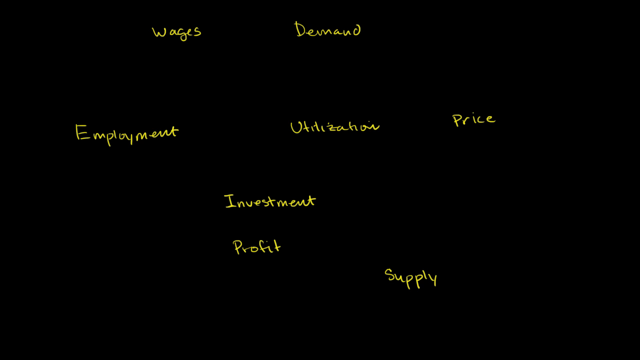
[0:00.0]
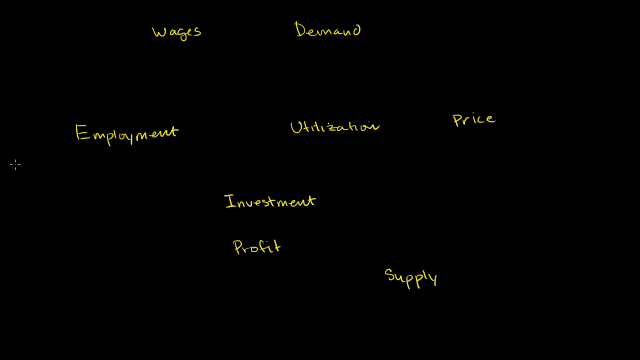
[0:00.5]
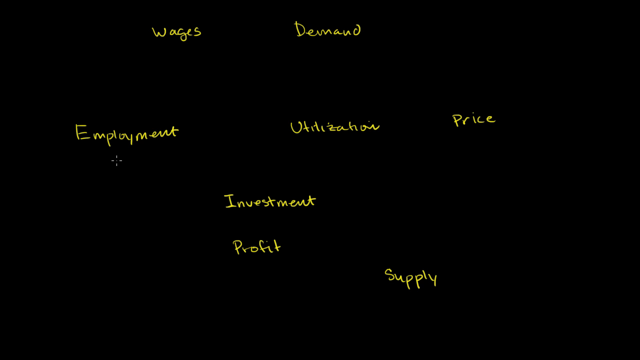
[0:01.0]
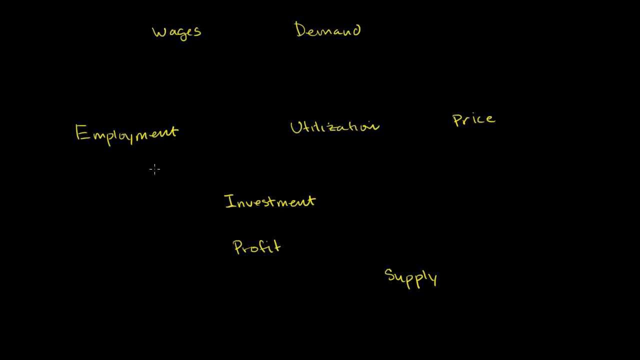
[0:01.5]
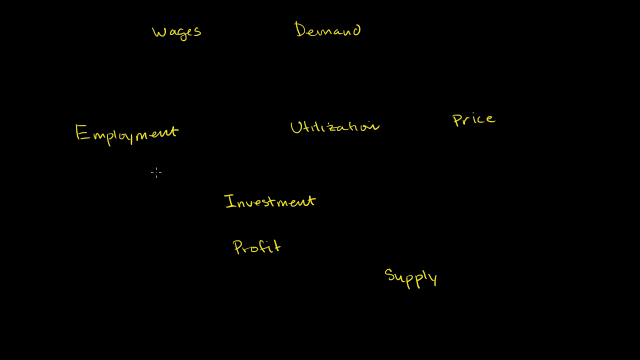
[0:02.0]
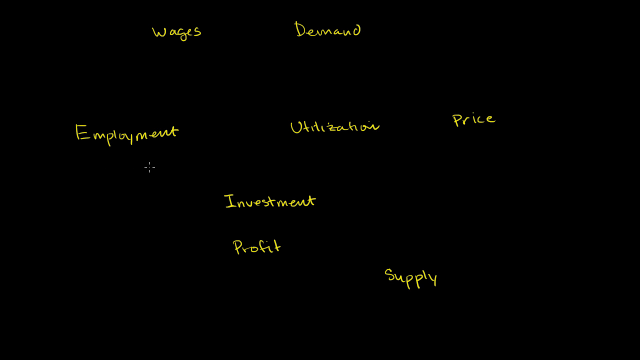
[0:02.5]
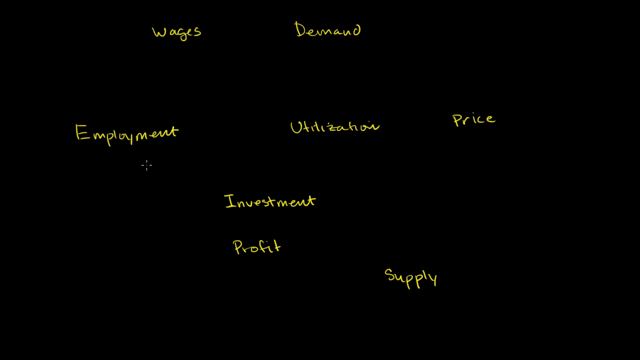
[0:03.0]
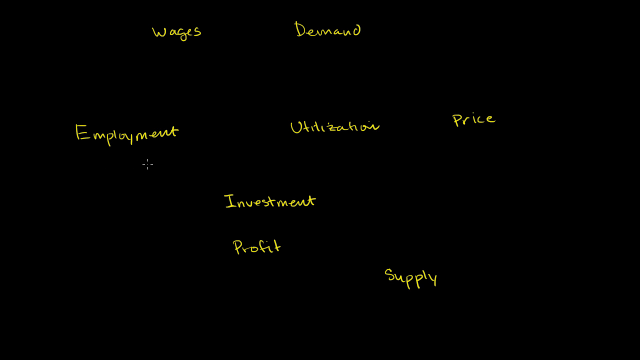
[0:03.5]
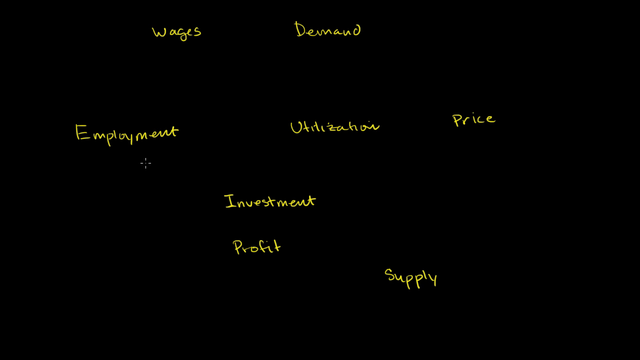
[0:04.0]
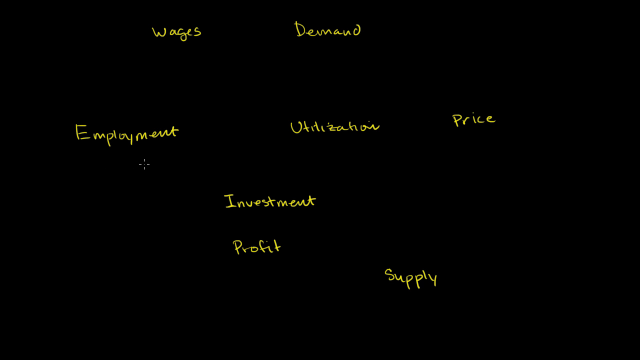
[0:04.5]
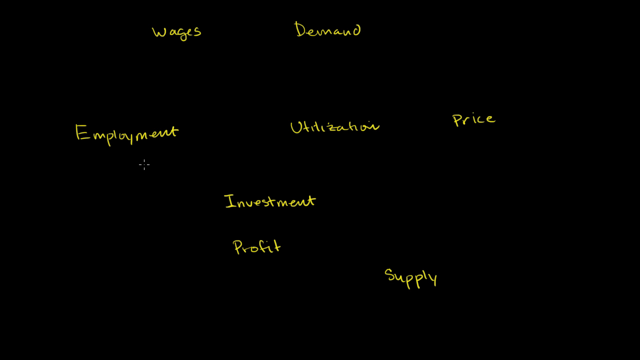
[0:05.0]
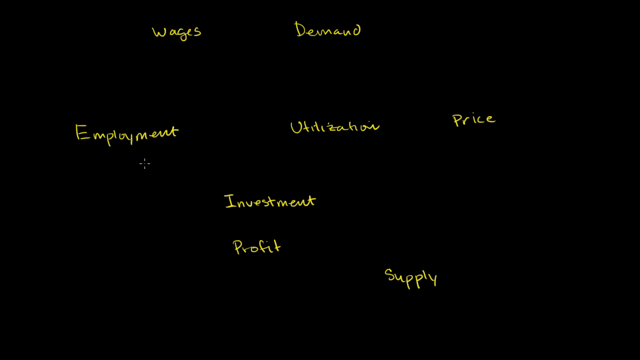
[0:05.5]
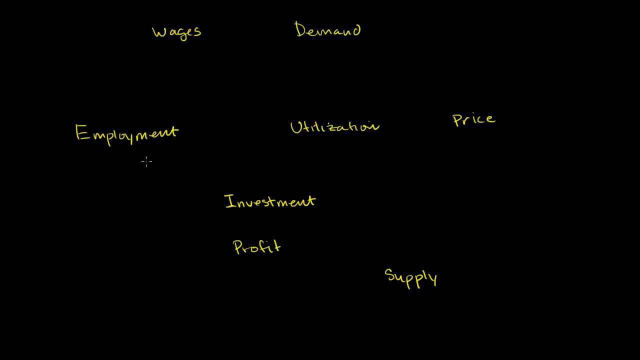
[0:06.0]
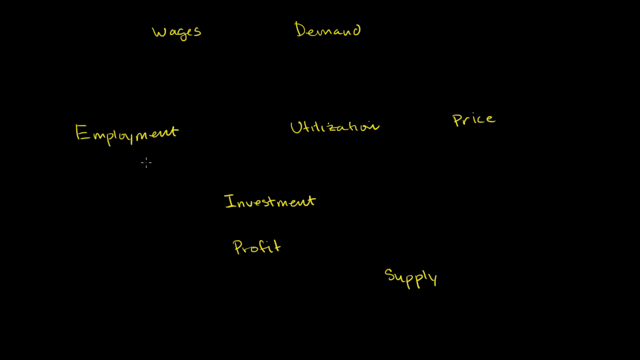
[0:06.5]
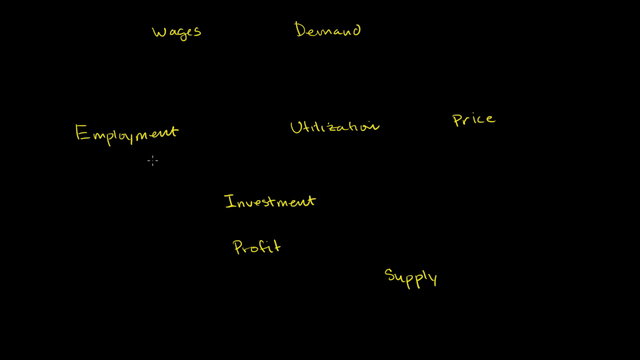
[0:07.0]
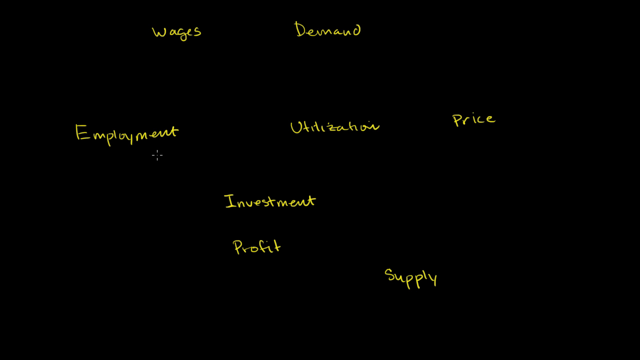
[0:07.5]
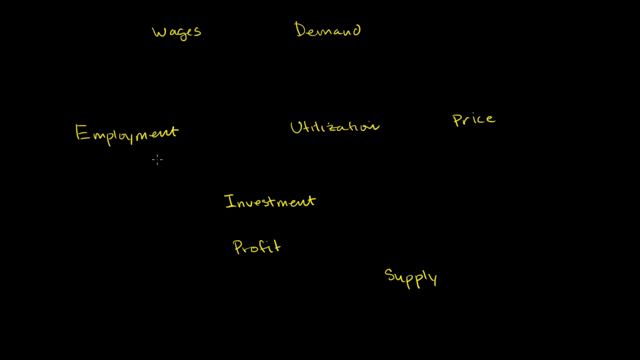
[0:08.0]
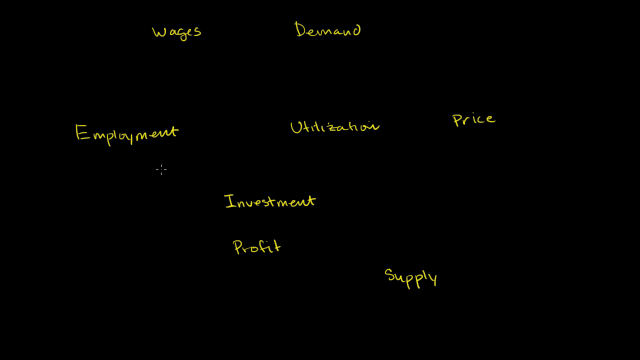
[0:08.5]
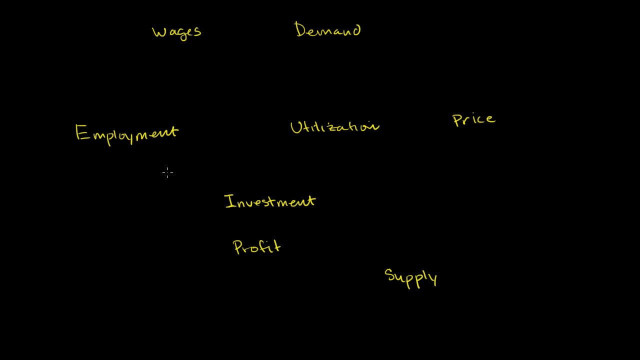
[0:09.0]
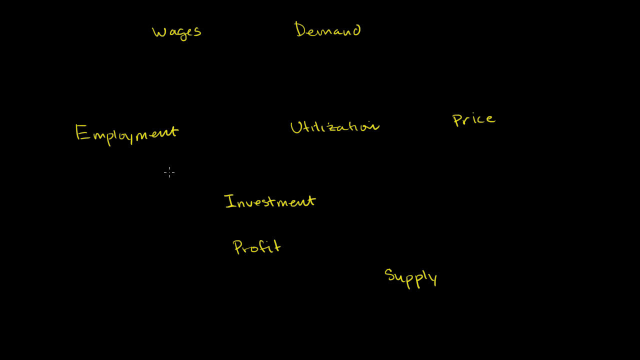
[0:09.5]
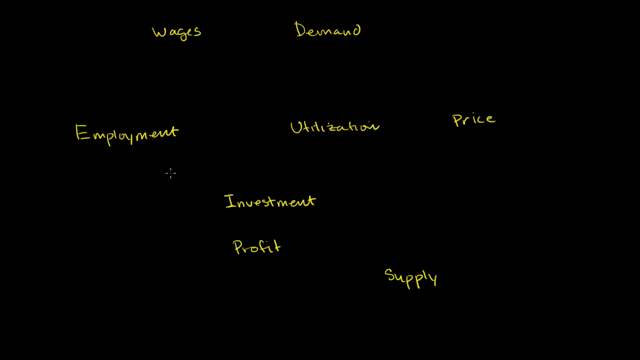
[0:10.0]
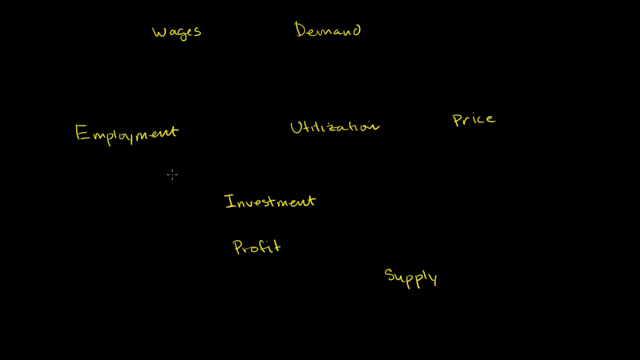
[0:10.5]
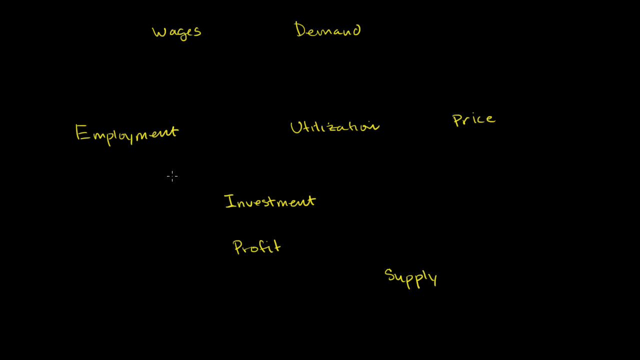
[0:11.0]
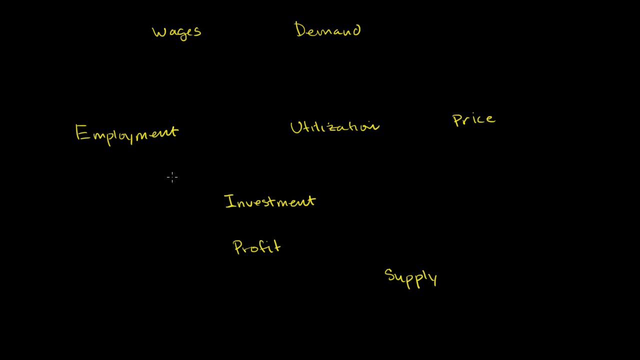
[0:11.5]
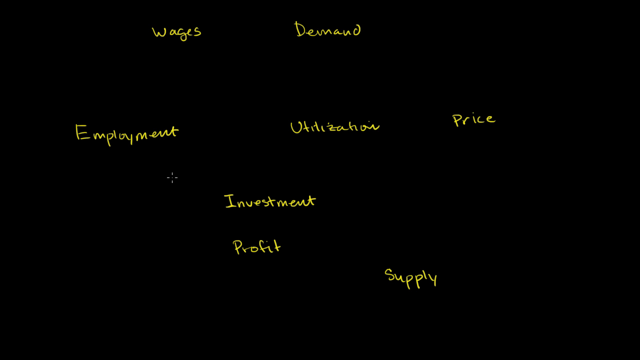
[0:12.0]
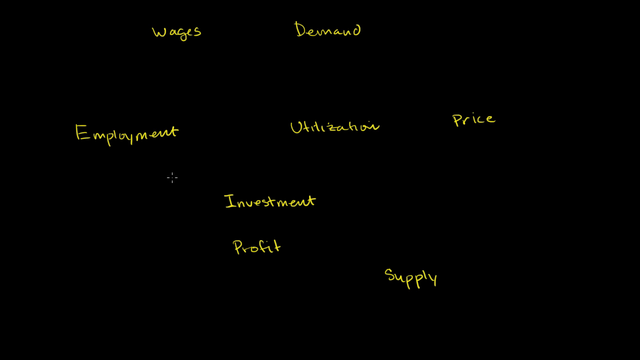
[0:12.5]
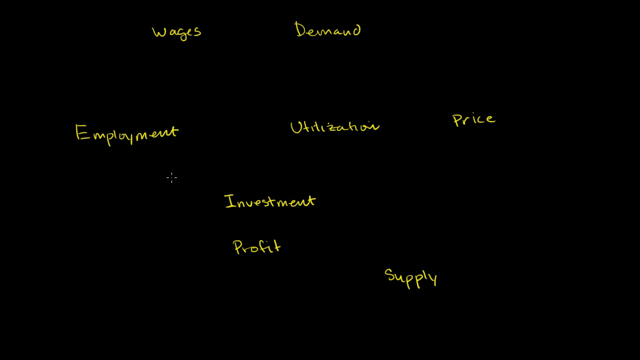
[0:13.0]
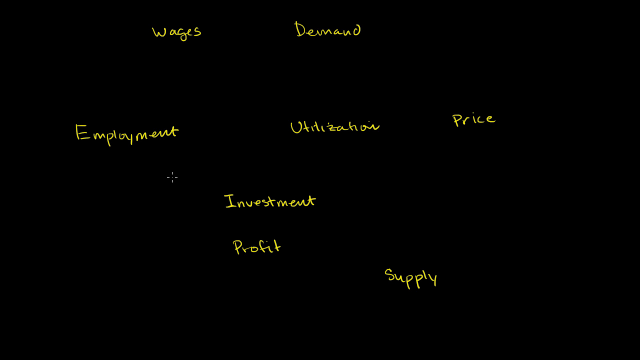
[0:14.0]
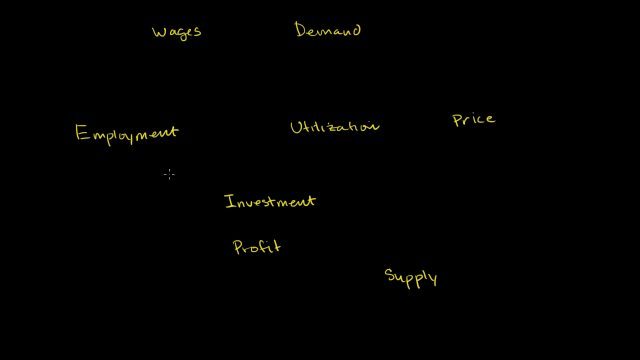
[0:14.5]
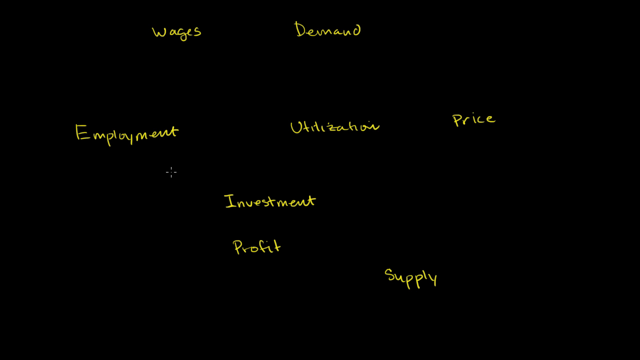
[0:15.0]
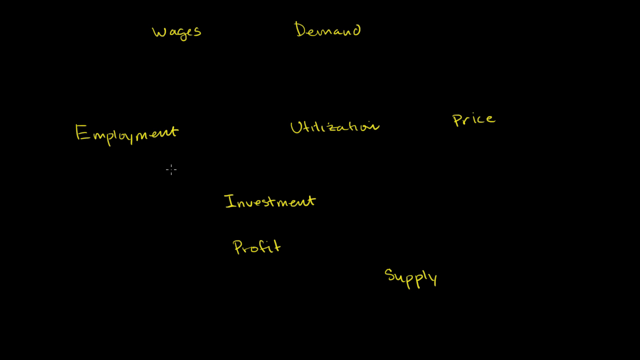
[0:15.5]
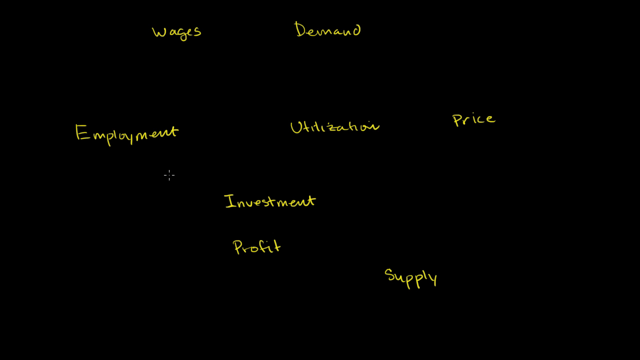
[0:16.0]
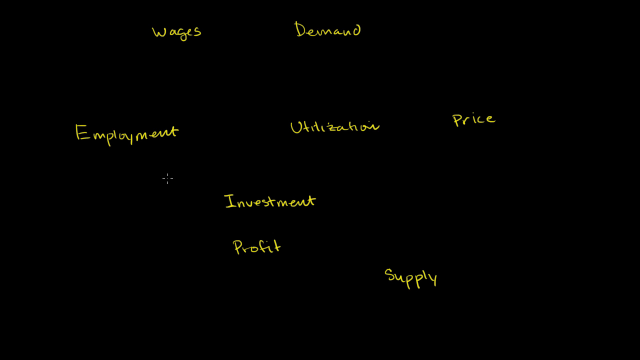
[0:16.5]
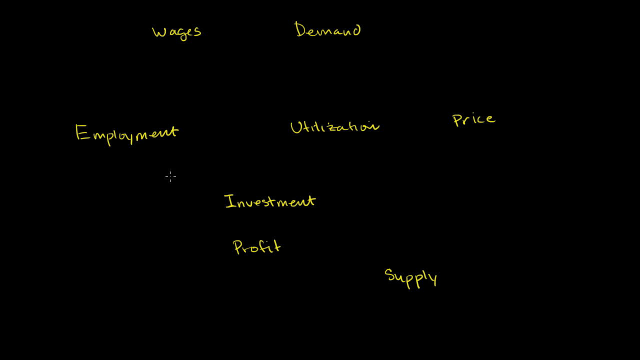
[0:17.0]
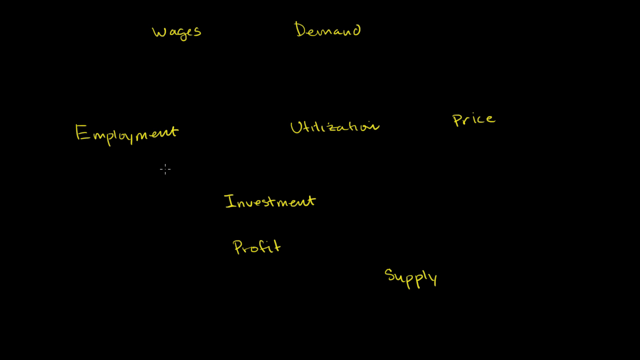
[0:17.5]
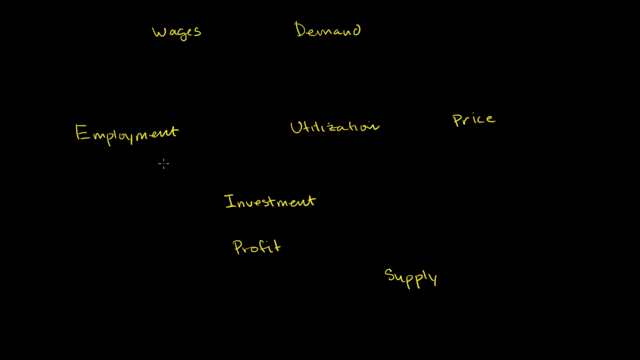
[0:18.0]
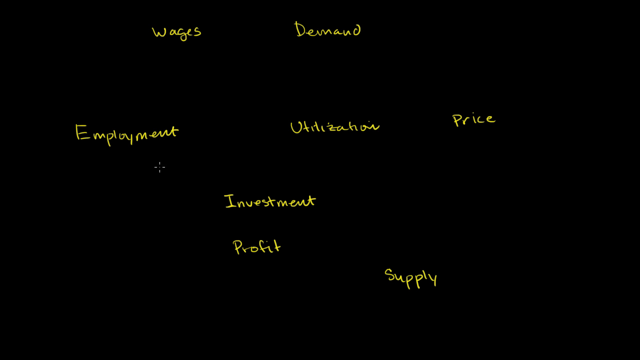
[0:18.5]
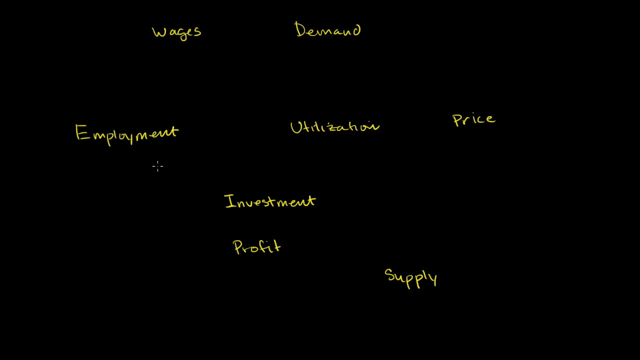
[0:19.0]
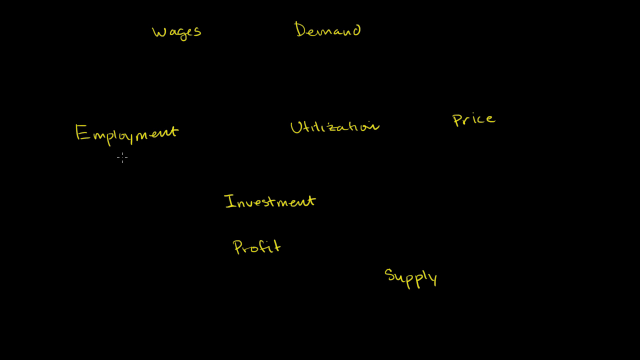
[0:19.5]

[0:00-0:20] A blank black screen shows eight words written in yellow. At the top left is the word "Wages," and next to it in the top middle is "Demand." On the middle line, "Employment" is on the left, "Utilization" is next to it on the right, and "Price" is next to "Utilization." Below those is "Investment," and directly below "Investment" is "Profit." On the bottom line toward the right-hand corner is "Supply." A cursor moves slowly between the words "Employment" and "Investment" but does not select any word. The words are in normal, non-cursive writing, each starting with a capital letter, and the writing is mostly neat with slight messiness.